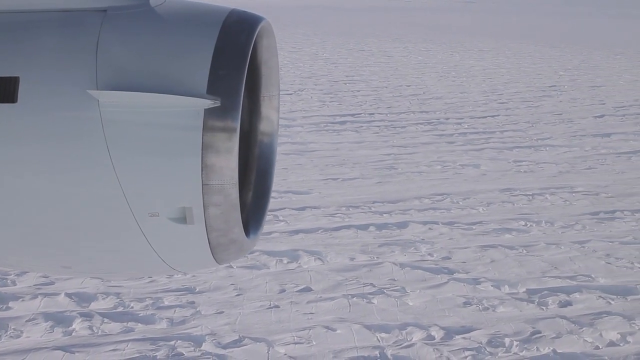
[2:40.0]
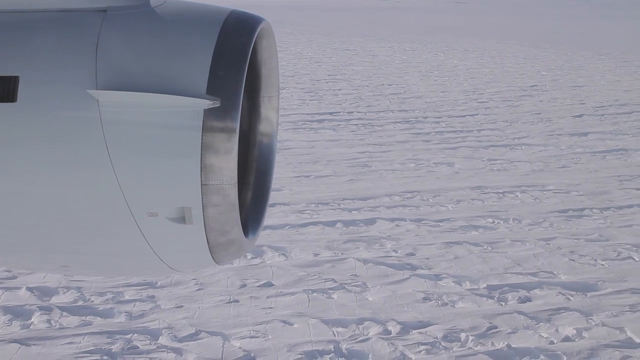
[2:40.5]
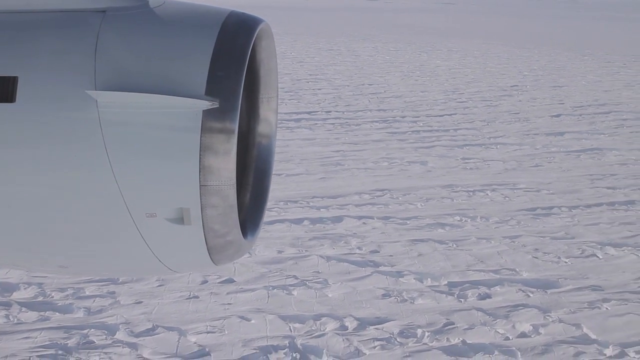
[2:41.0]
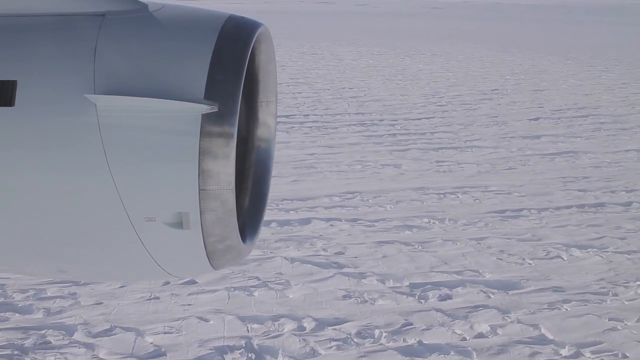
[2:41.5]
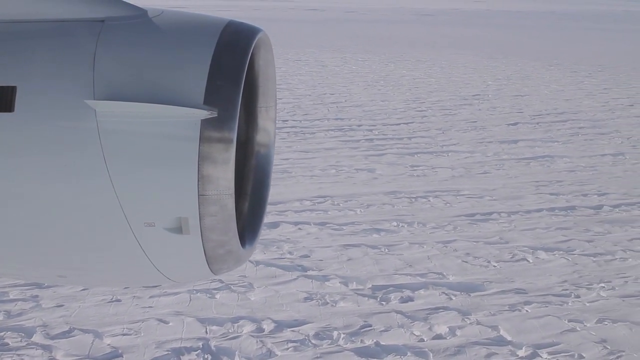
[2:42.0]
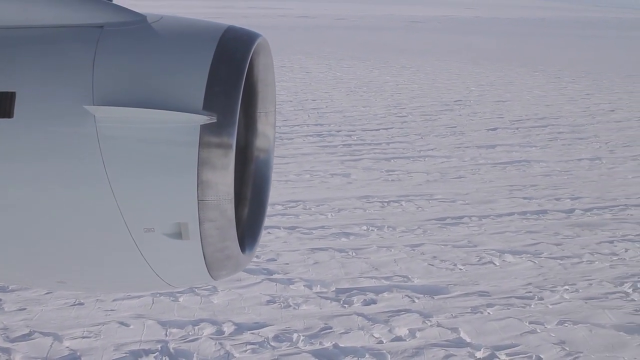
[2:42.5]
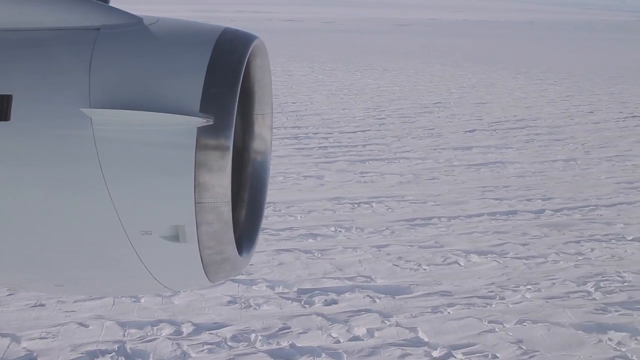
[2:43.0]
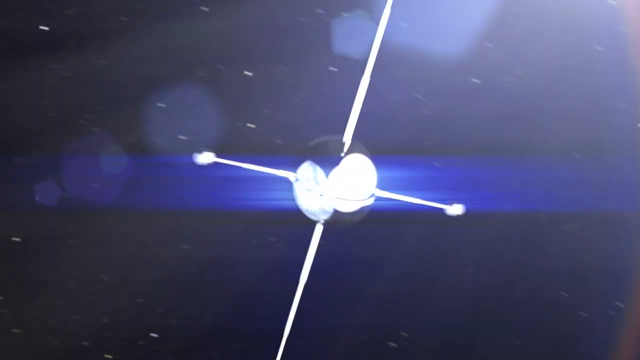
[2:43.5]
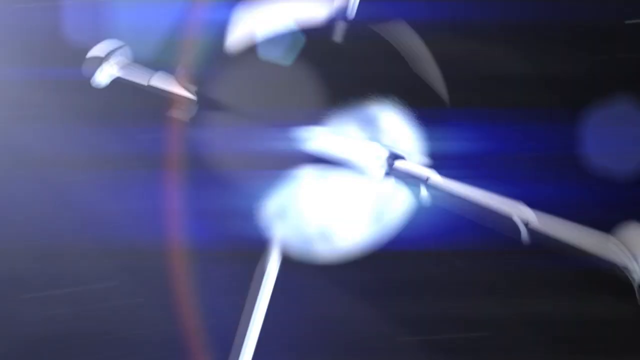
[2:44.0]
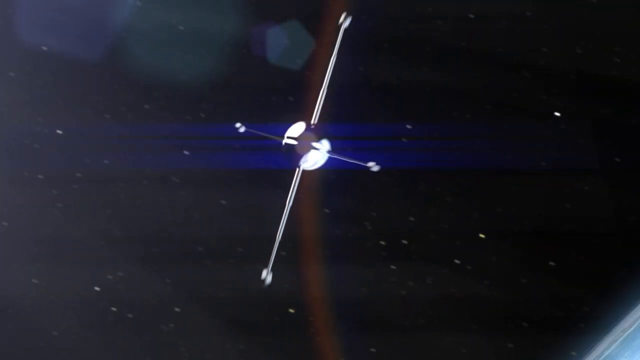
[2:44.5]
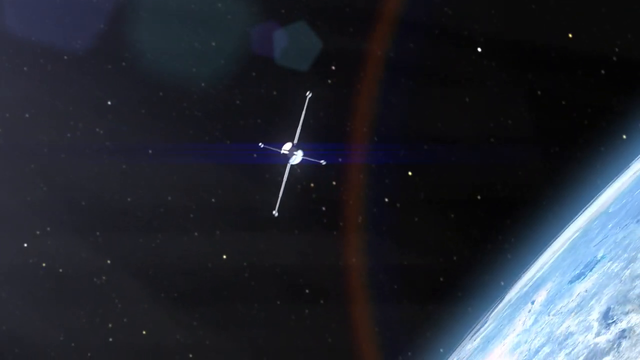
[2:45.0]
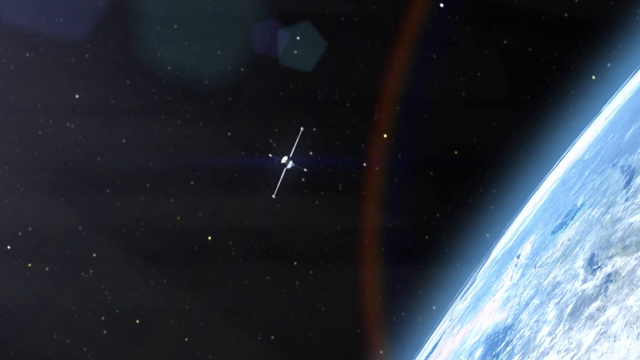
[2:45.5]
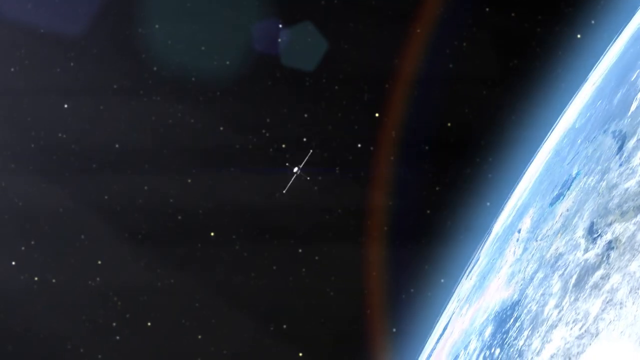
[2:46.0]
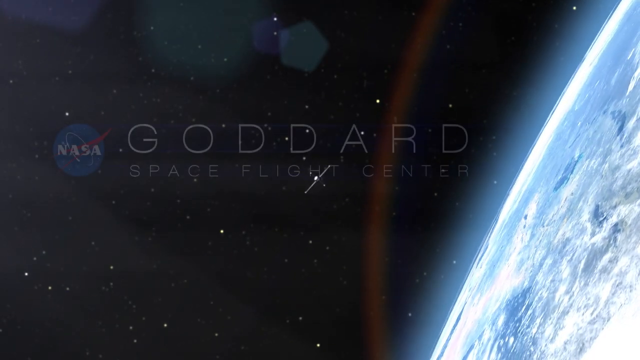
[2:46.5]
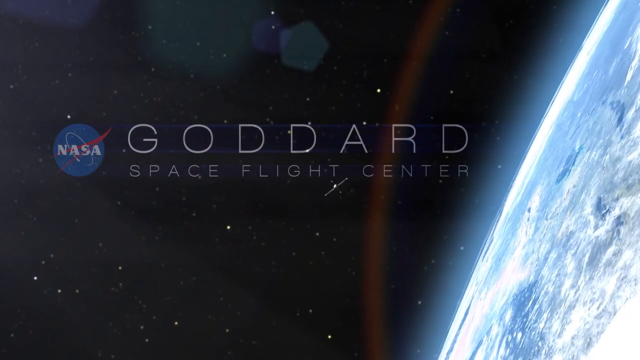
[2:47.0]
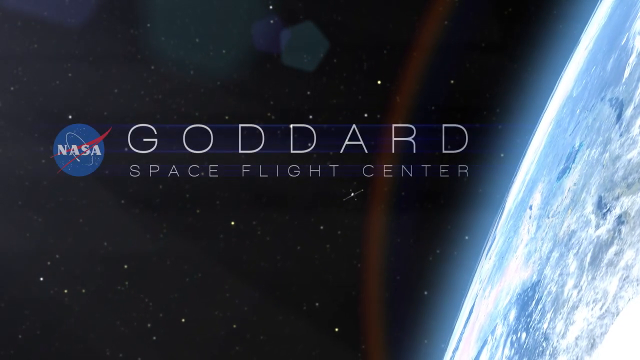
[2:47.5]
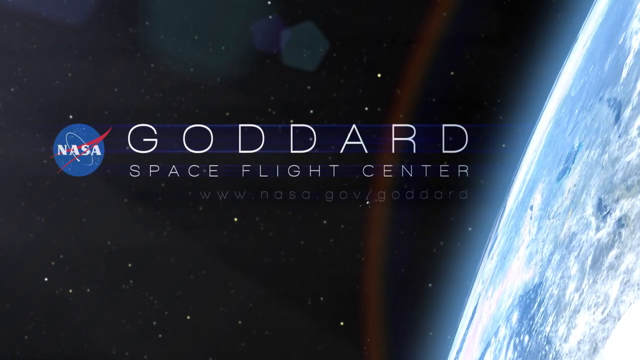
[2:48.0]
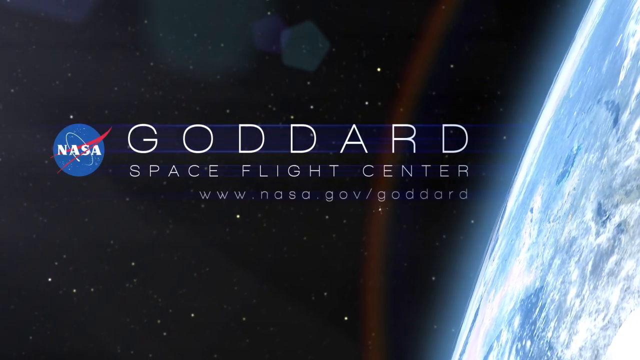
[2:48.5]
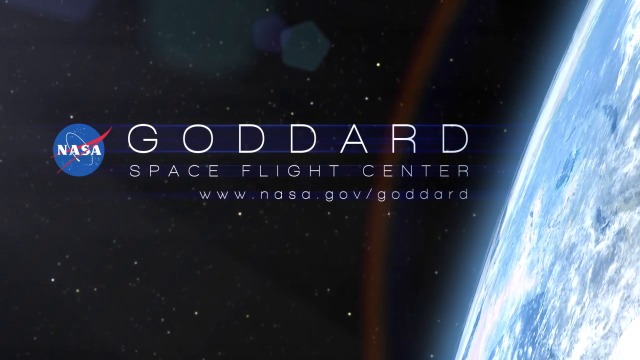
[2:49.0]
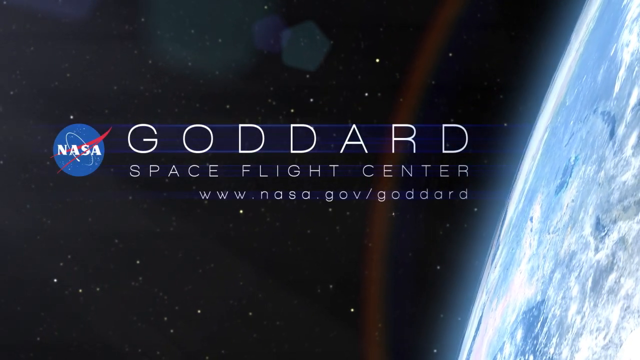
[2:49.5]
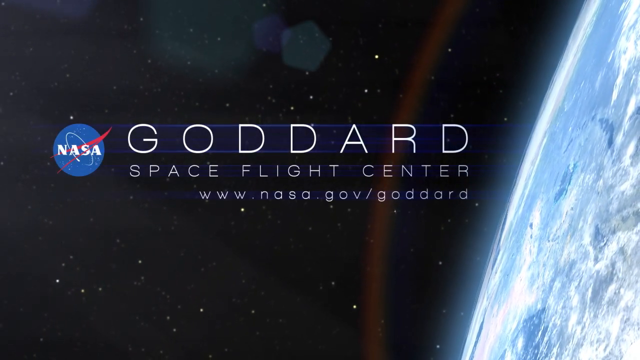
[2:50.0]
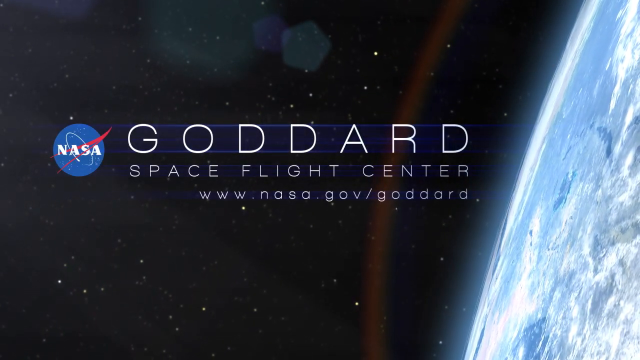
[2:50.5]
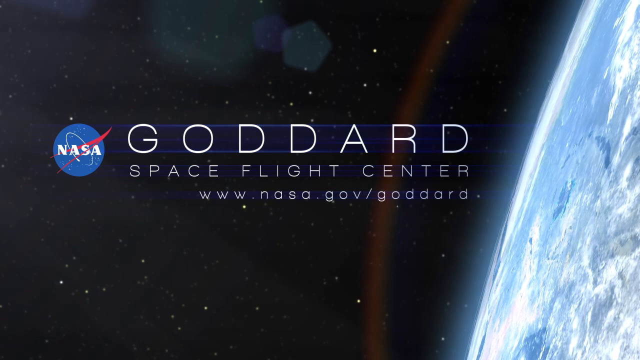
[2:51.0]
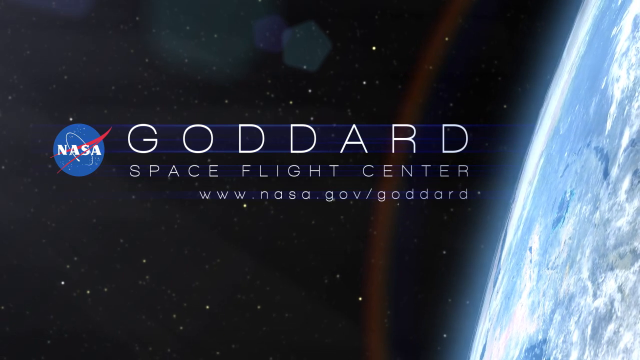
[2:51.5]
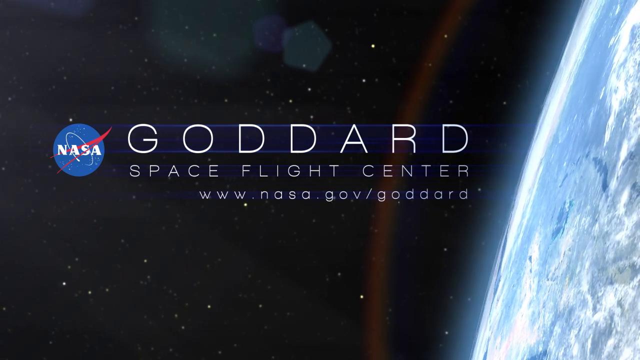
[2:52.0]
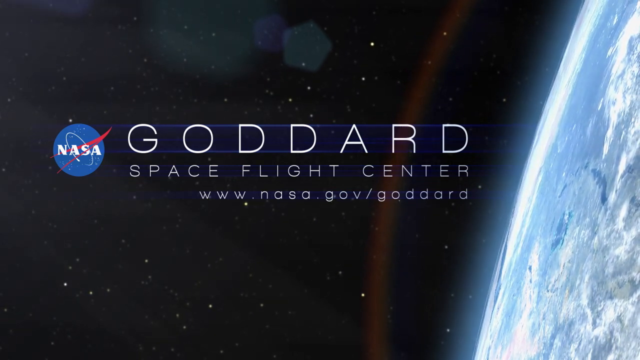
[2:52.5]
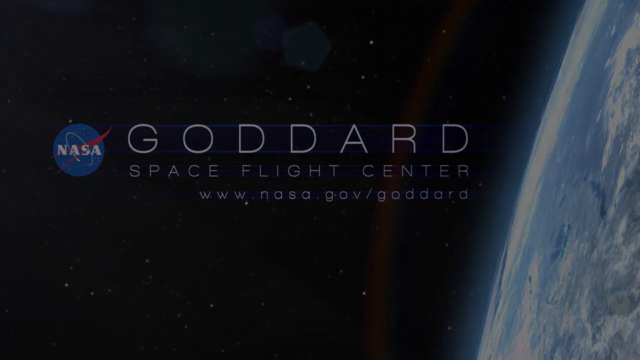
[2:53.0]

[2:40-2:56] An airplane view shows a big icy area with a lot of snow, like Antarctica or the South Pole. A satellite in space and a picture of the Earth appear, with text reading "Goddard Space Flight Center NASA". The screen then goes black.